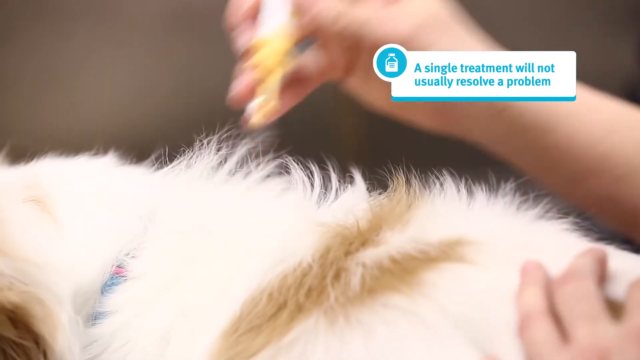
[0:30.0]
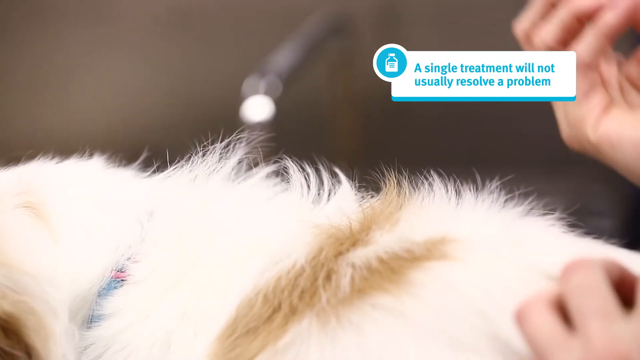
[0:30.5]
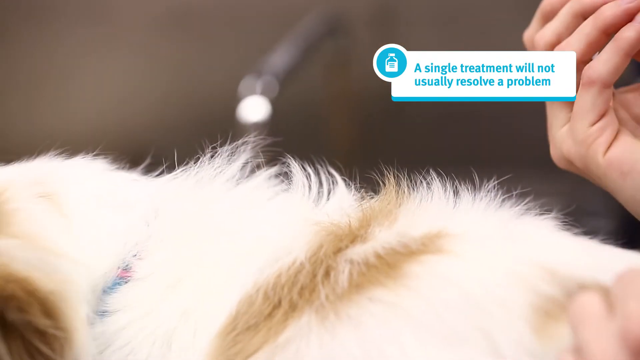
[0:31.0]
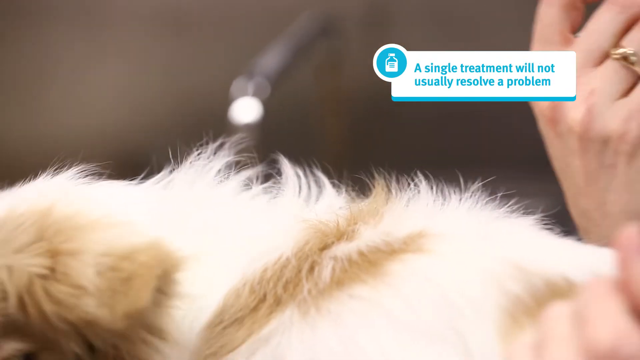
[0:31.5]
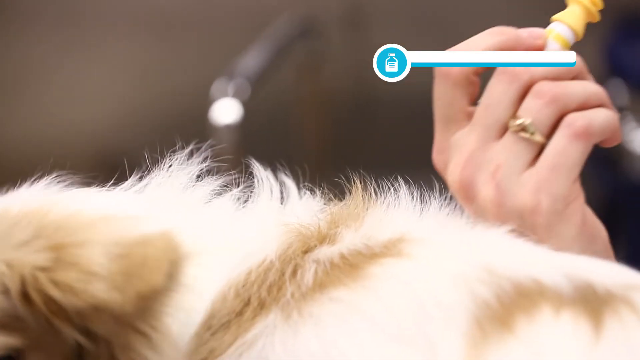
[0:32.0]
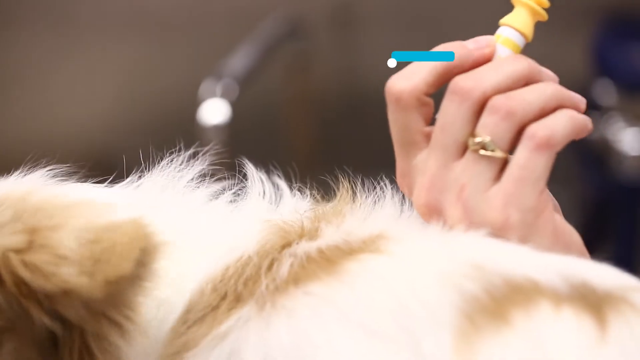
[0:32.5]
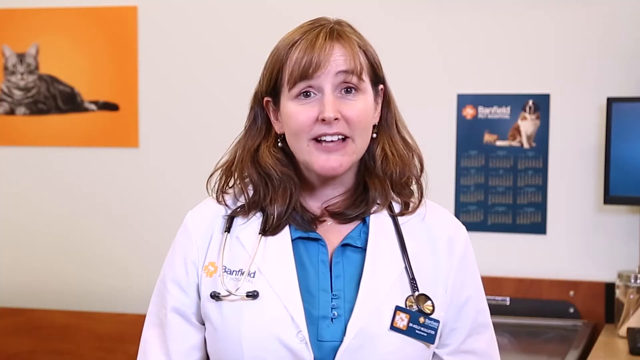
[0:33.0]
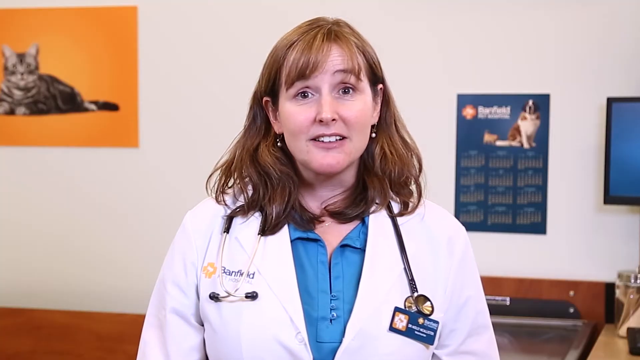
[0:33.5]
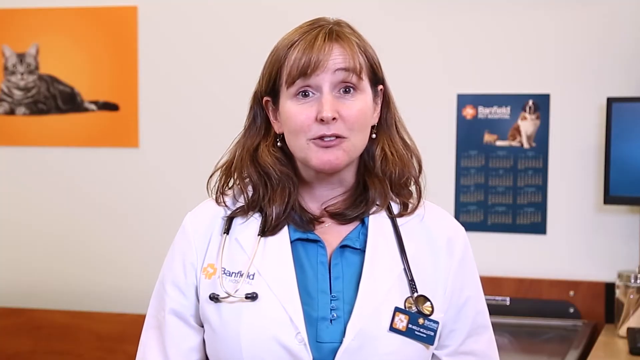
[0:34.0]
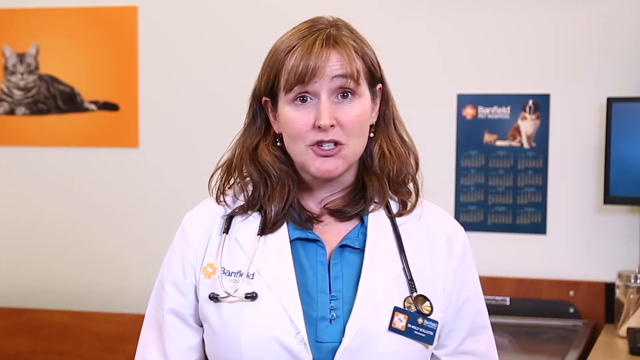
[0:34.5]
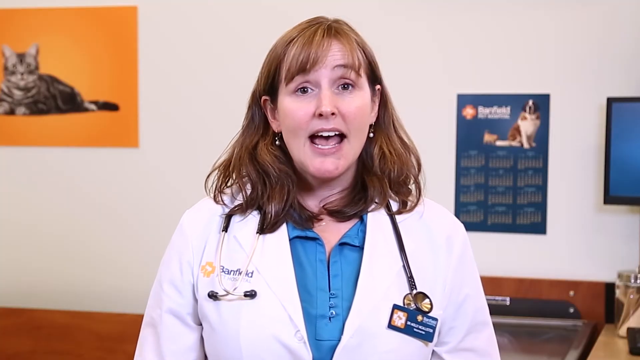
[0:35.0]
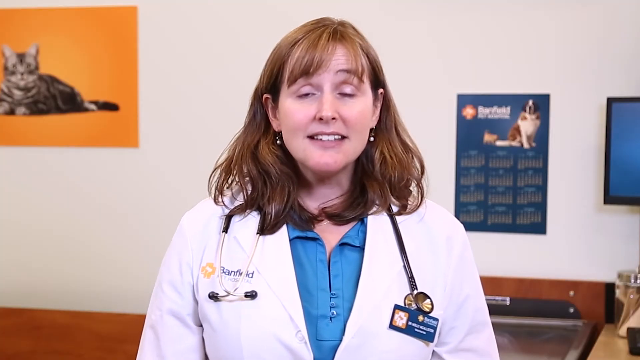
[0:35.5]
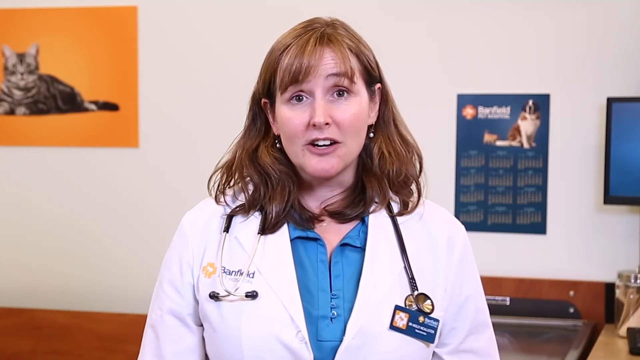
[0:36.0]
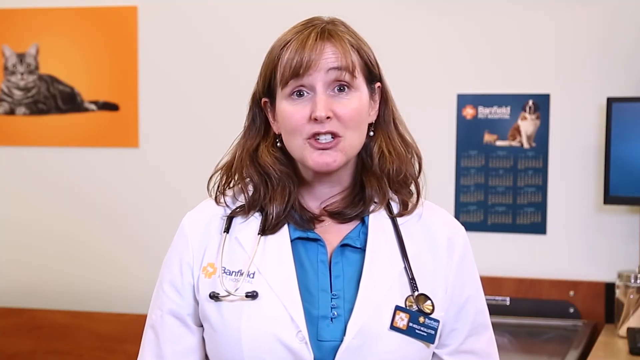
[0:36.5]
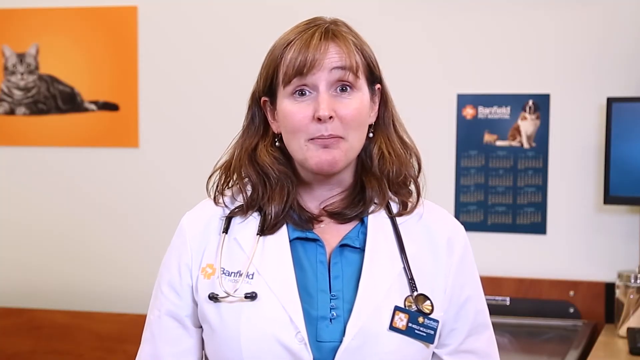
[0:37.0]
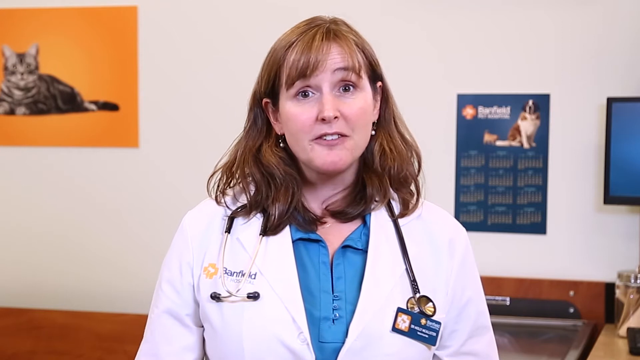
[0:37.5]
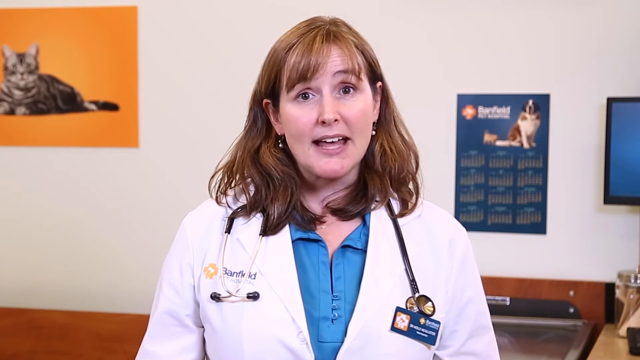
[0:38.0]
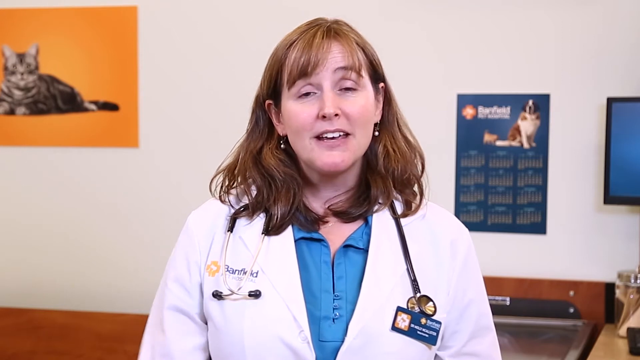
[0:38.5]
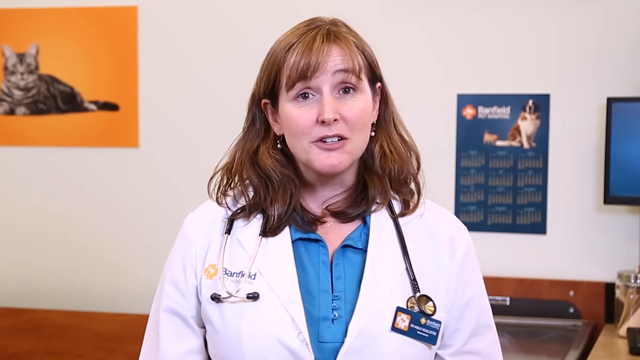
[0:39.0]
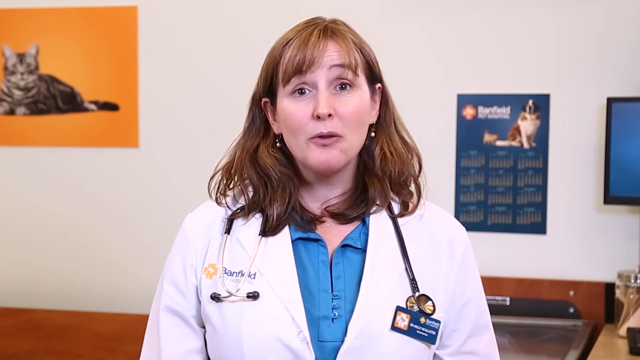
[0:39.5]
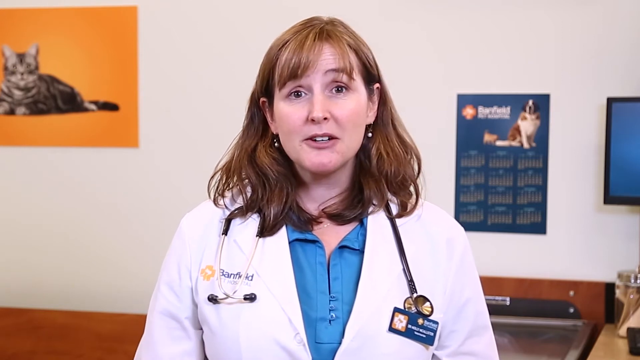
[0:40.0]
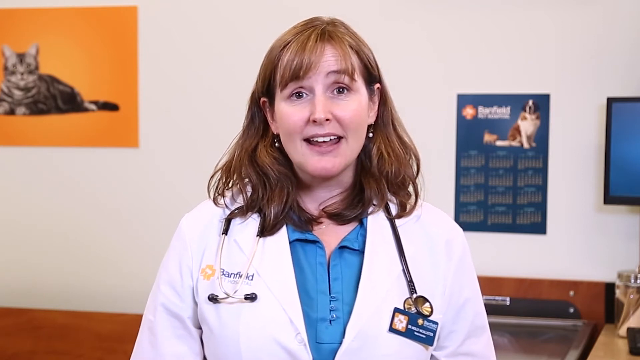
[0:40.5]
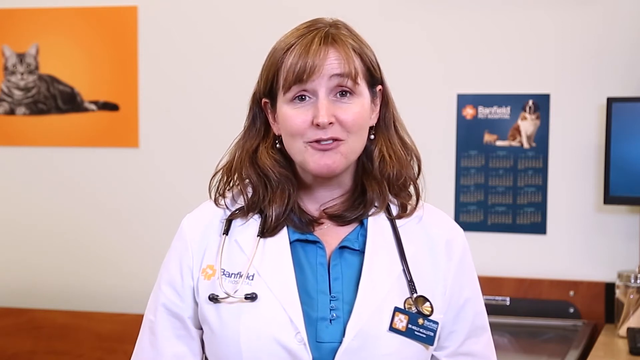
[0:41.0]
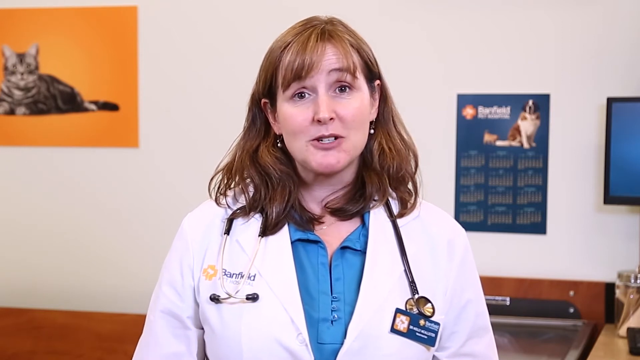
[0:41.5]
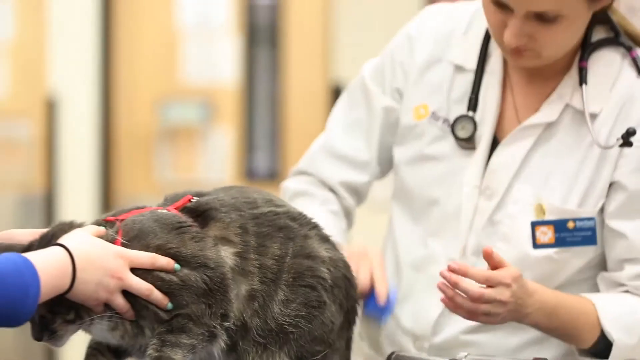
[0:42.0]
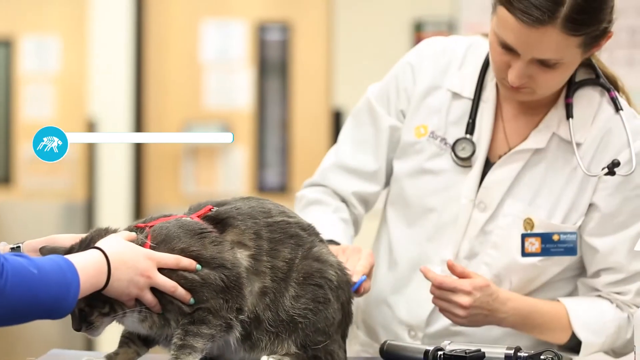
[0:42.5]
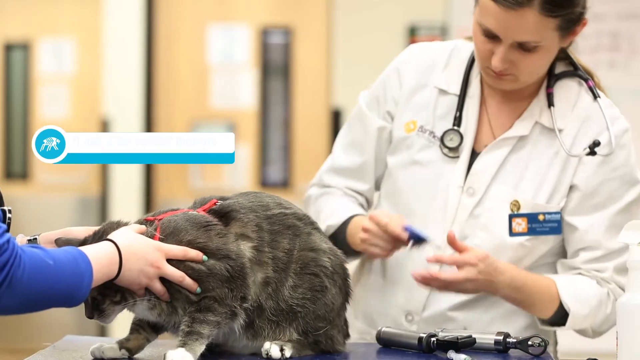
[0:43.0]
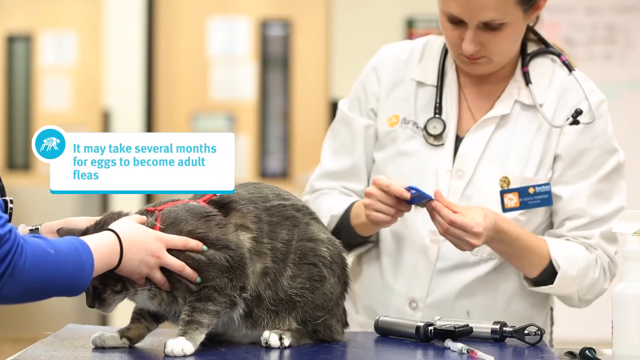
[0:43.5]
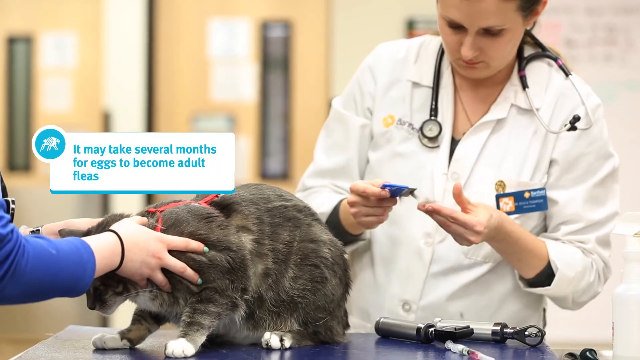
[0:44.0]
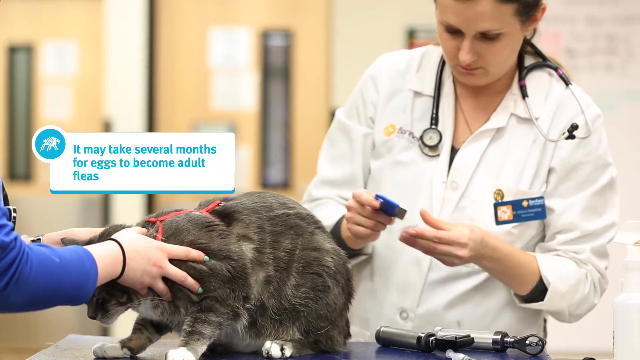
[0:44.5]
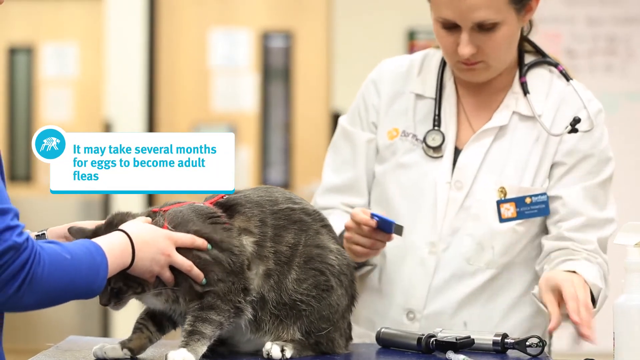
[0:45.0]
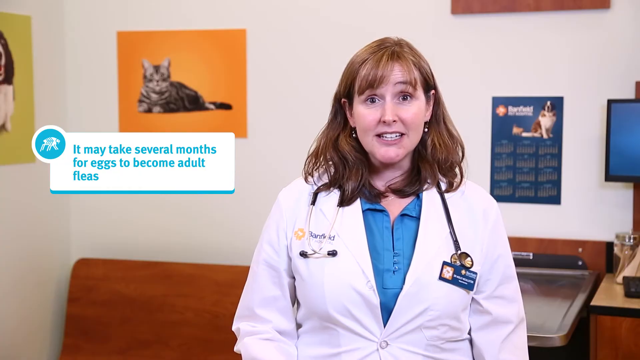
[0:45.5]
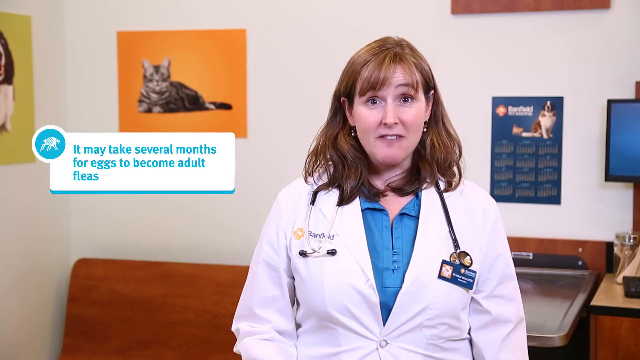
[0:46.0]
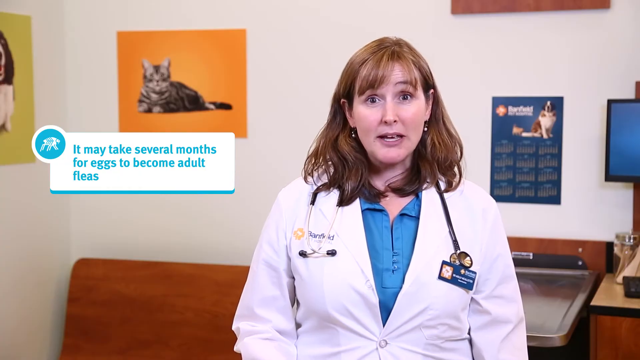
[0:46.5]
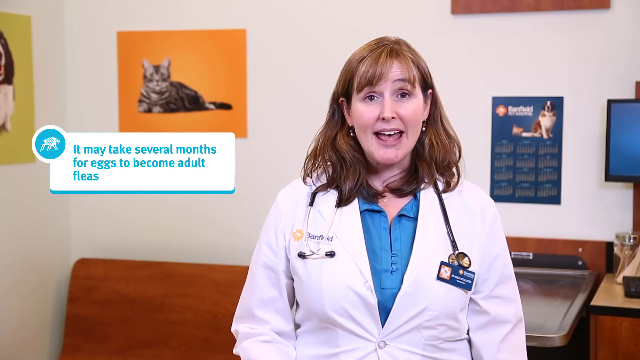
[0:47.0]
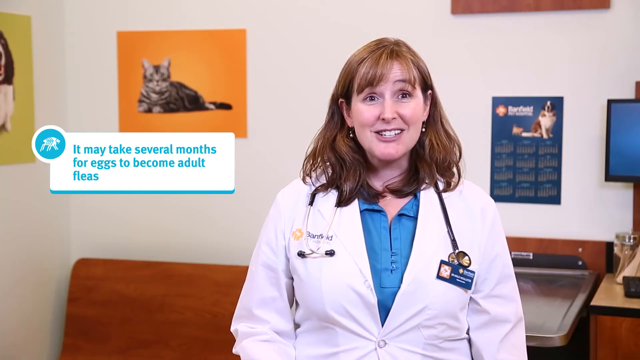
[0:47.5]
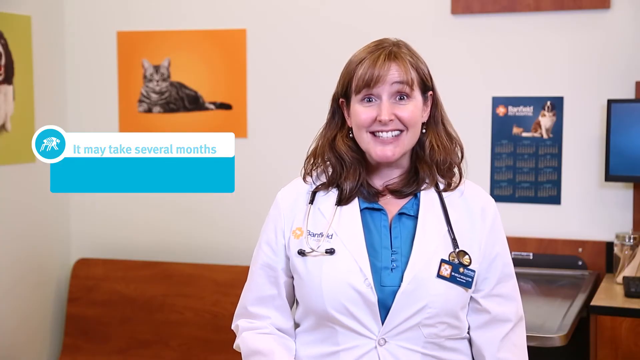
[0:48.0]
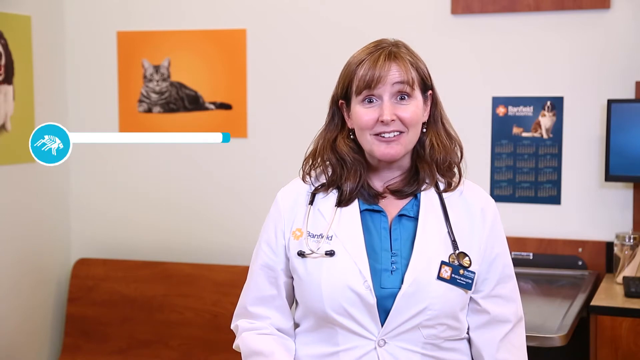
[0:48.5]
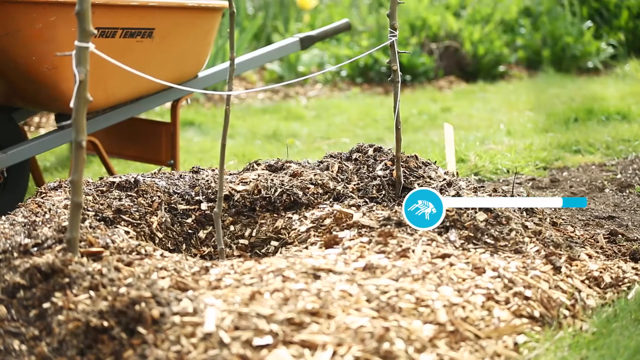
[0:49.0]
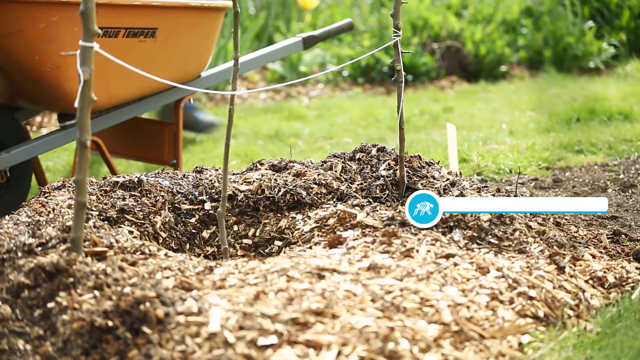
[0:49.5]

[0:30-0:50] The veterinarian talks, again wearing her coat and stethoscope. She then treats a gray mottled cat wearing a red harness, using a blue comb, apparently to comb out lice. She wears a white lab coat, a stethoscope and a name tag, and has dark brown hair. A person holding the cat in place while the veterinarian brushes through with the comb wears kind of a blue shirt and what appears to be a black bracelet. A graphic on the screen says "it may take several months for eggs to become adult fleas." The veterinarian is then seen again talking to the camera.